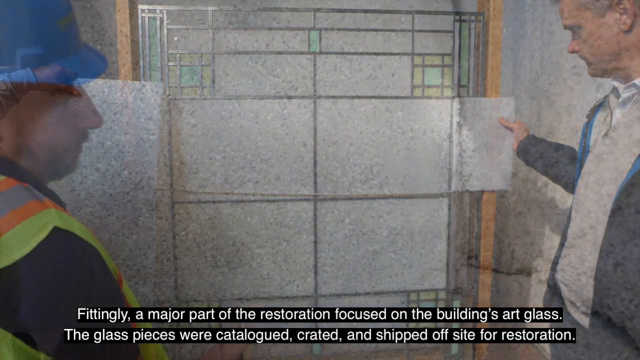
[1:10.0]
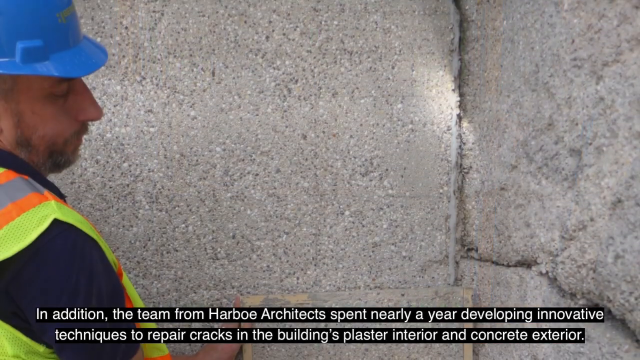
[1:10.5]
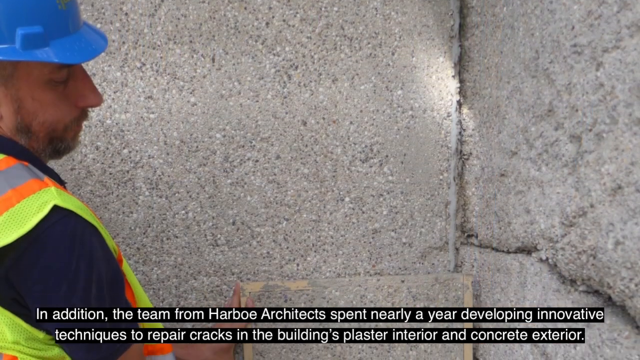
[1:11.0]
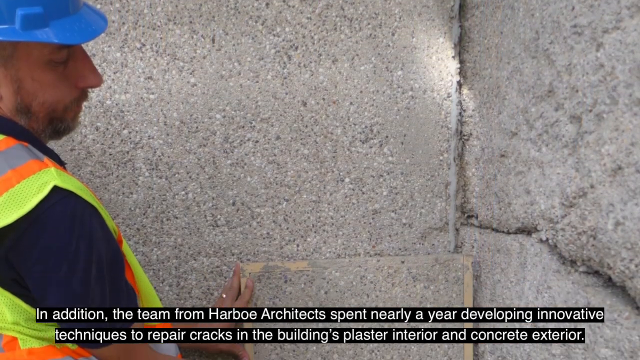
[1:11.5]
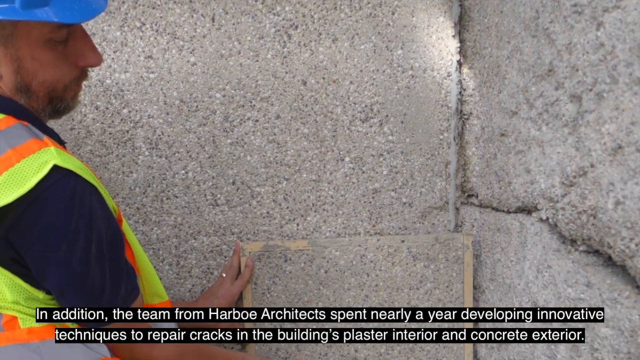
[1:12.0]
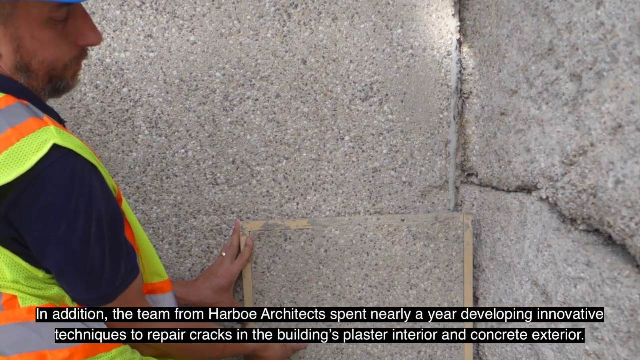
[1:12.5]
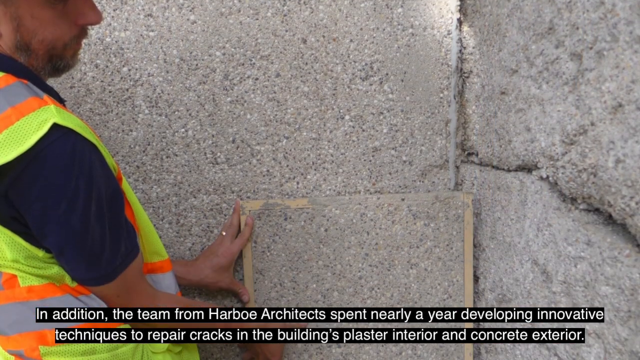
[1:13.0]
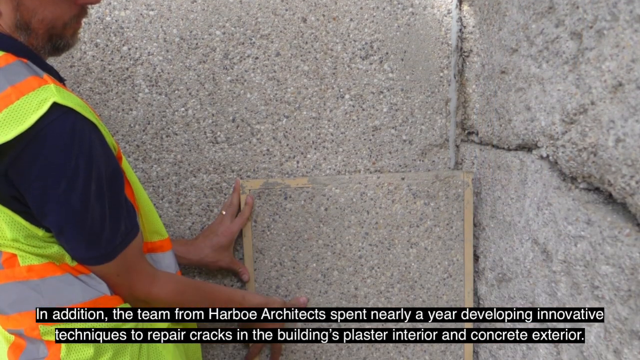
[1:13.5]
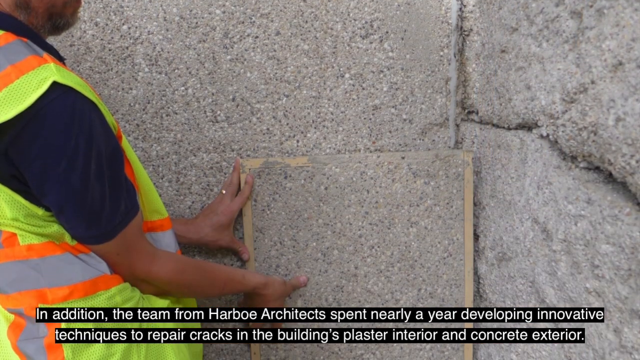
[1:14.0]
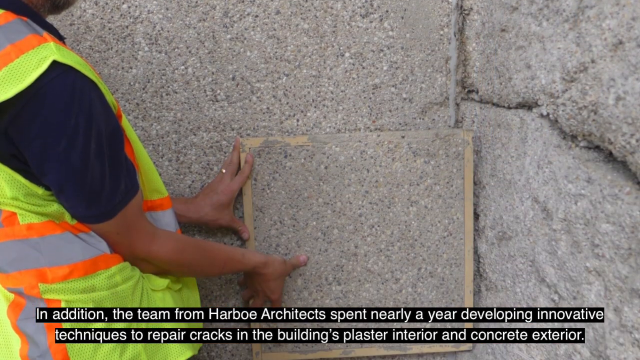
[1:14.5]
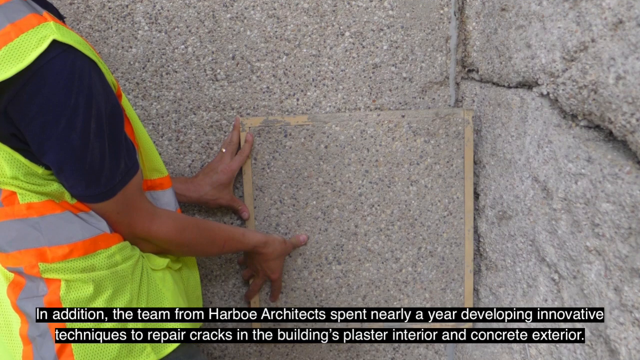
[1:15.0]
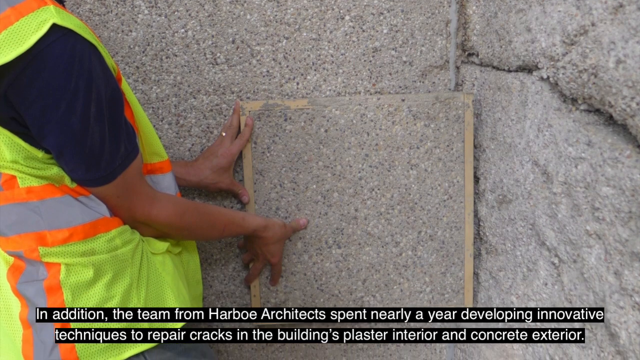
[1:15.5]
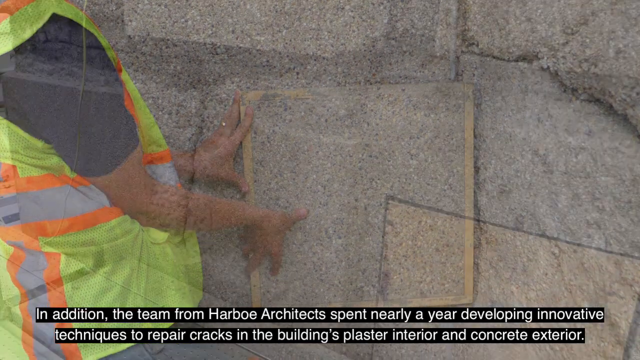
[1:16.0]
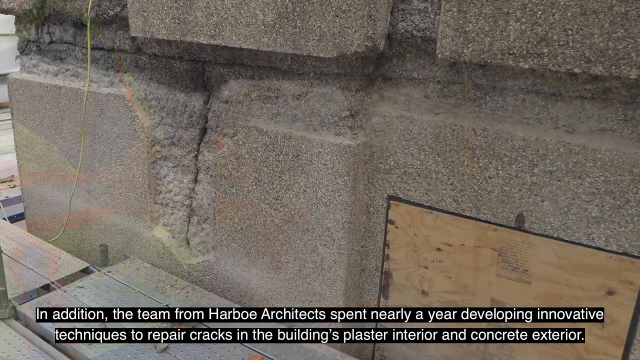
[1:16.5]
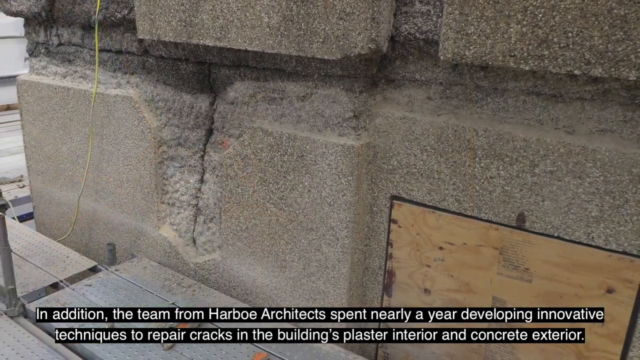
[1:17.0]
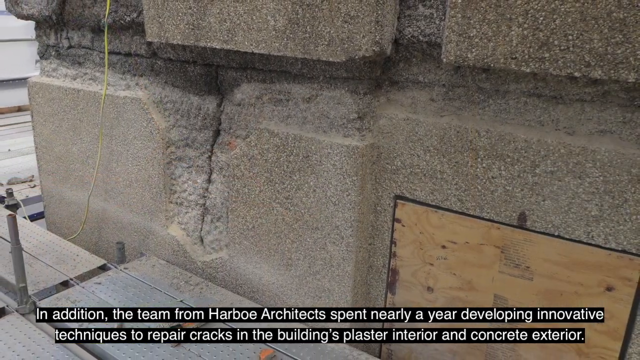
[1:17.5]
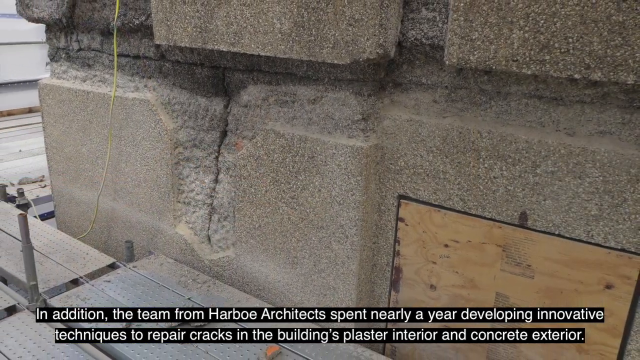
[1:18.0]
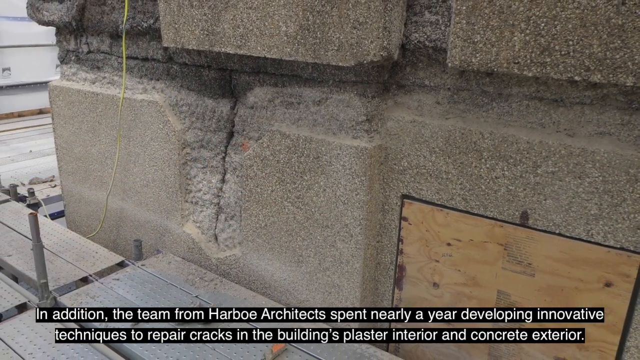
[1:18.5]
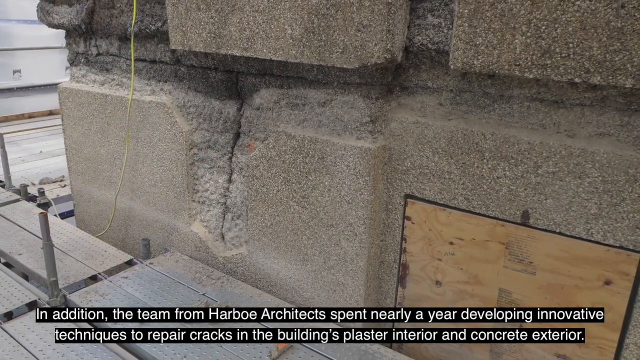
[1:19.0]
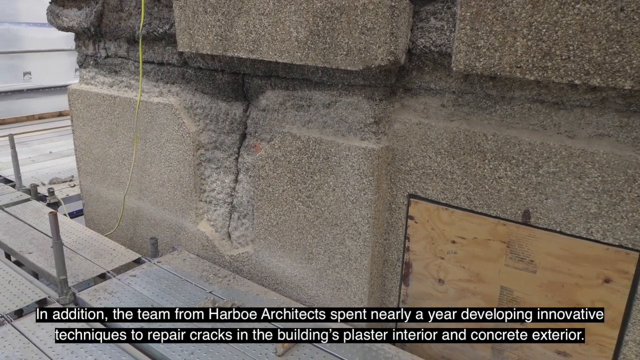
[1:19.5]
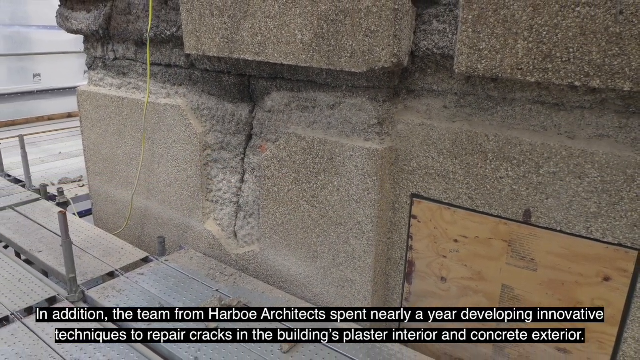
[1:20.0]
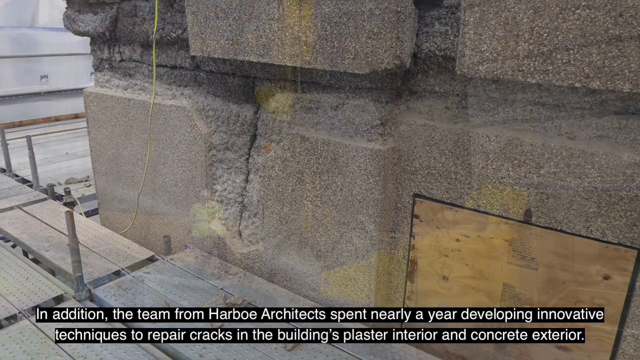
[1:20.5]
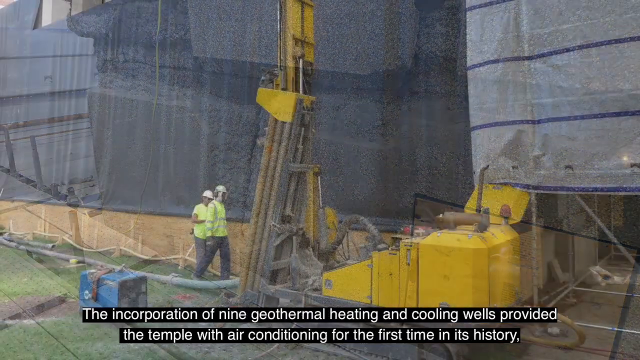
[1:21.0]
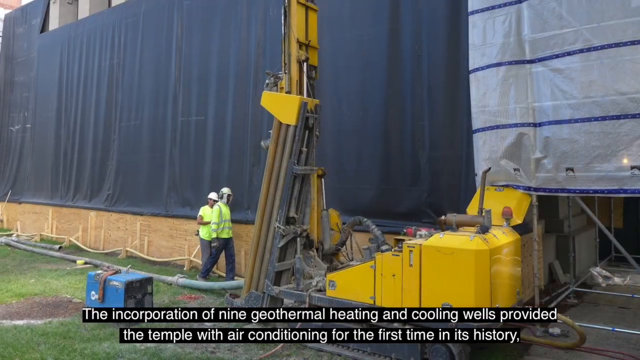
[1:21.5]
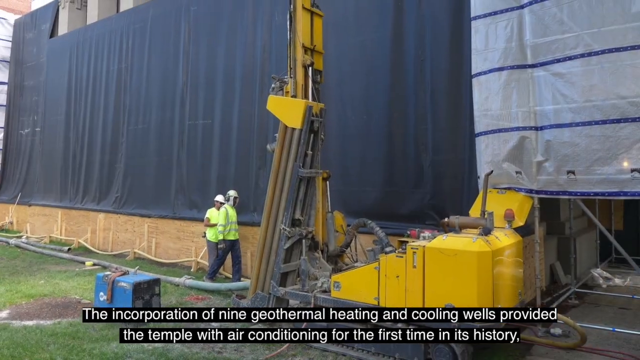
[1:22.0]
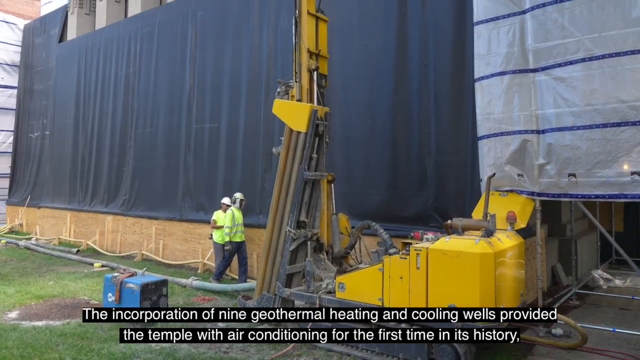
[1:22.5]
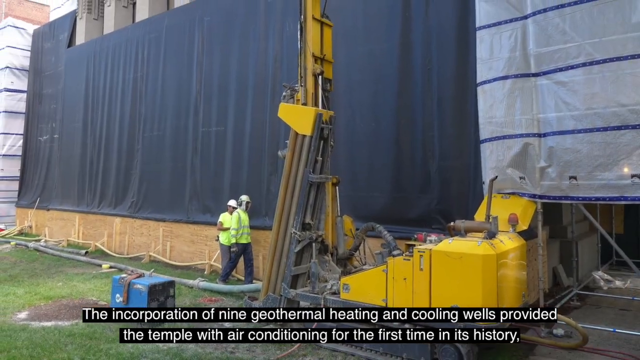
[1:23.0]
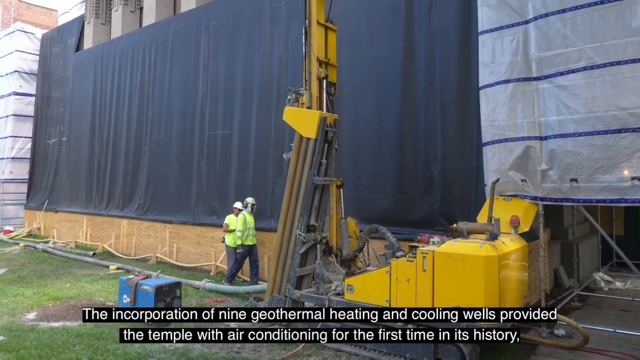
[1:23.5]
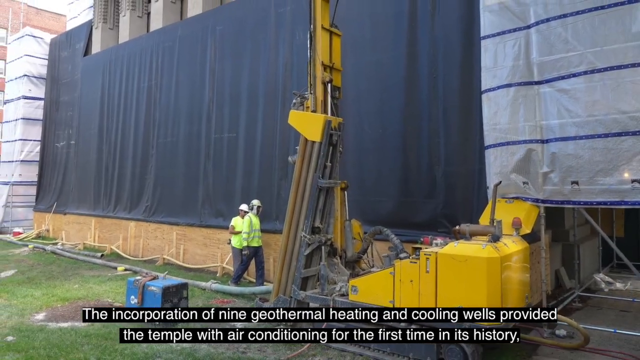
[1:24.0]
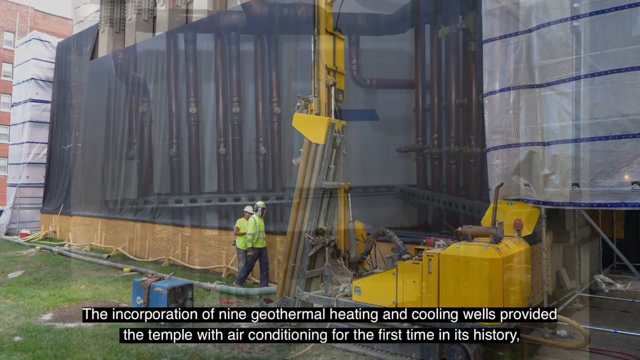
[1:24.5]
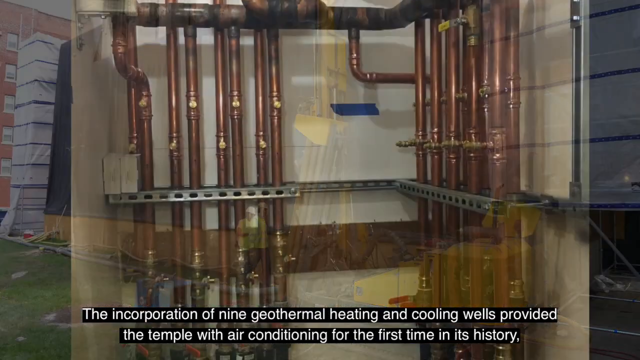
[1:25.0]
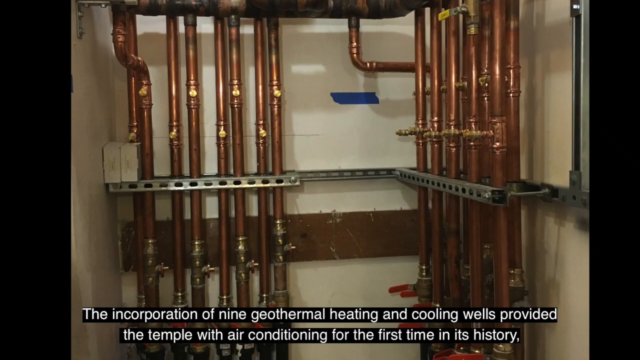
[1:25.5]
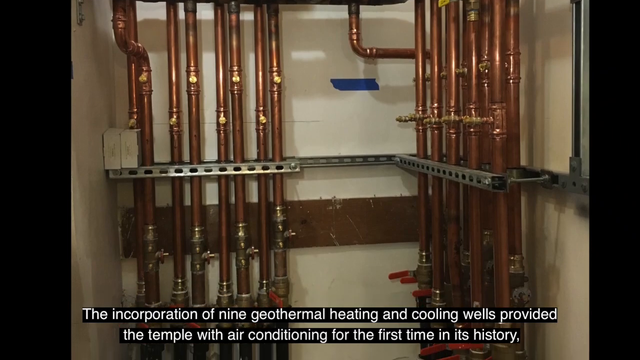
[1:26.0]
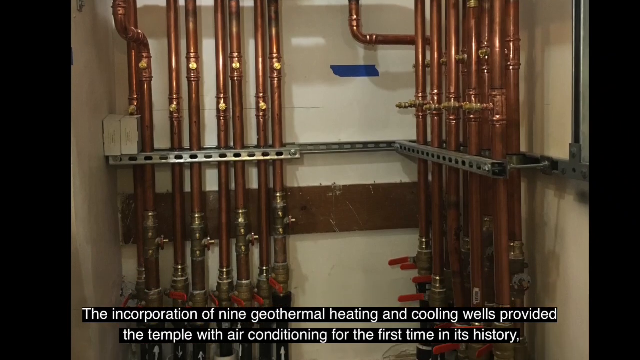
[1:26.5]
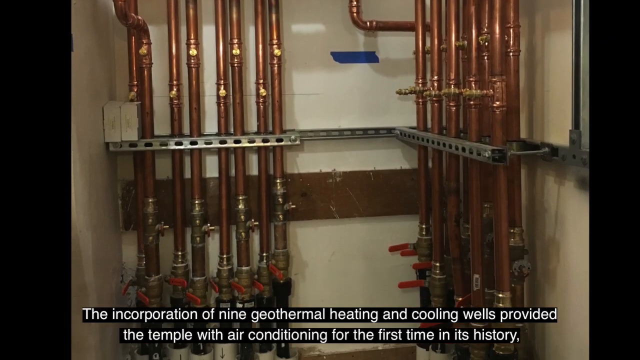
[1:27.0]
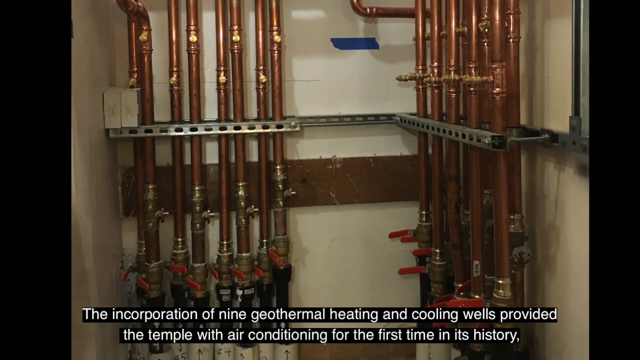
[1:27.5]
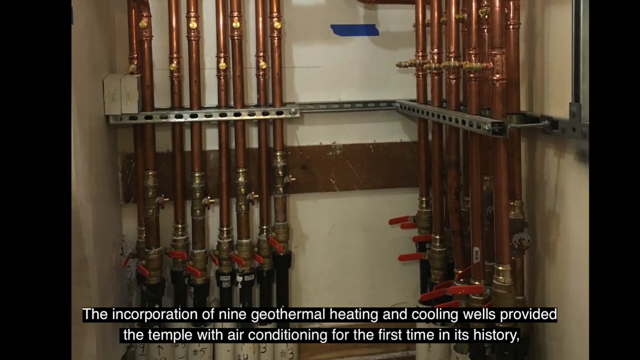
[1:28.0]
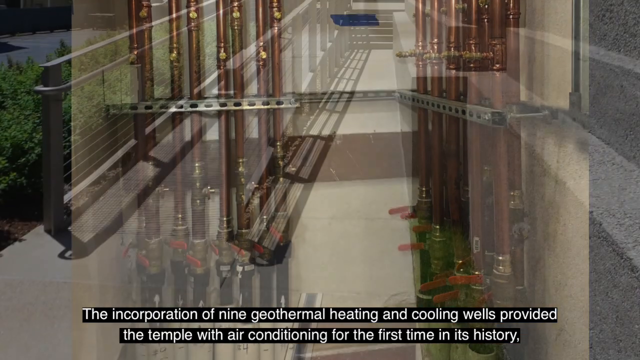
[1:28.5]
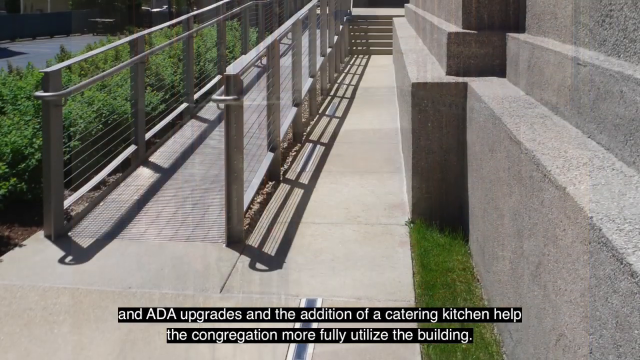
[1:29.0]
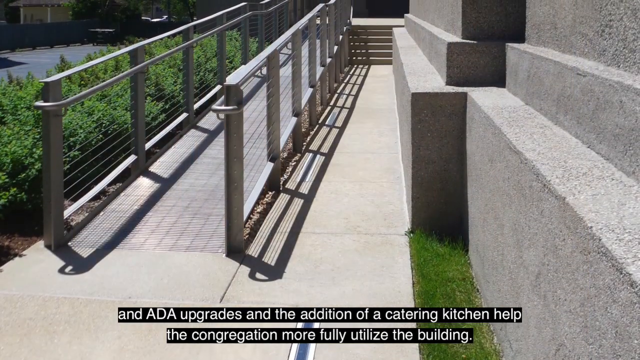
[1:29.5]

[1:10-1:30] A series of shots shows the repairs that were needed. First is the outside masonry, which is badly damaged, with workers matching the existing concrete to new forms; they are men wearing hard hats and yellow safety vests. Images show major equipment being brought in for the exterior repairs. The view pans over to the new cooling and heating system, with copper pipes on the inside. On the outside, newly built concrete ramps and finished walkways are shown. Meanwhile the caption reads "In addition, the team from Harboe Architects spent nearly a year developing innovative techniques to repair cracks in the building's plaster interior and concrete exterior. The incorporation of nine geothermal heating and cooling wells provided the temple with air conditioning for the first time in its history, and ADA upgrades and the addition of a catering kitchen help the congregation more fully utilize the building."